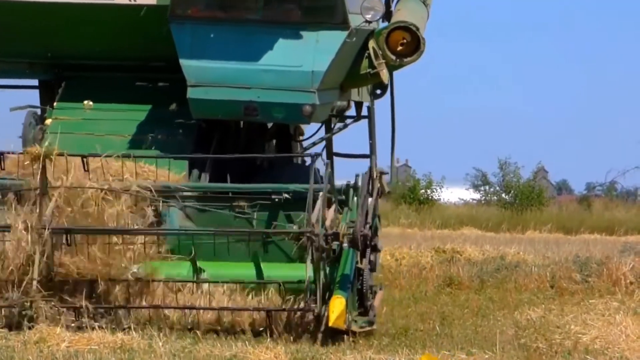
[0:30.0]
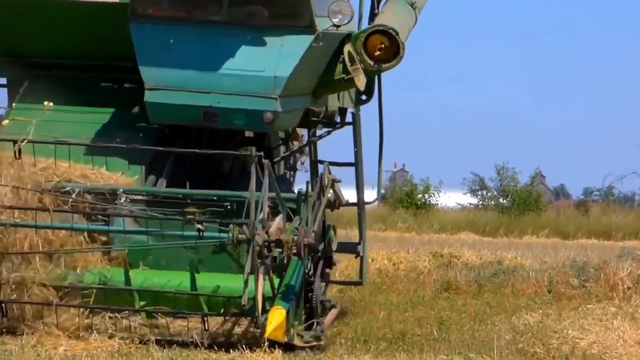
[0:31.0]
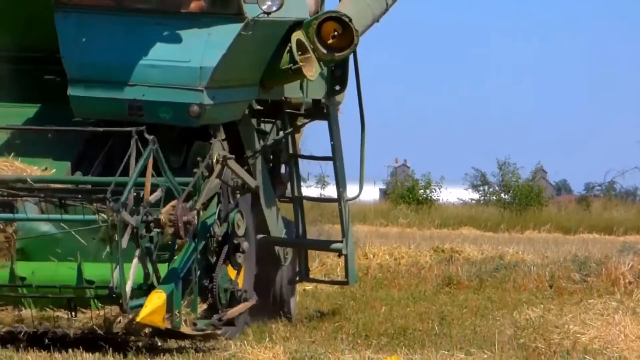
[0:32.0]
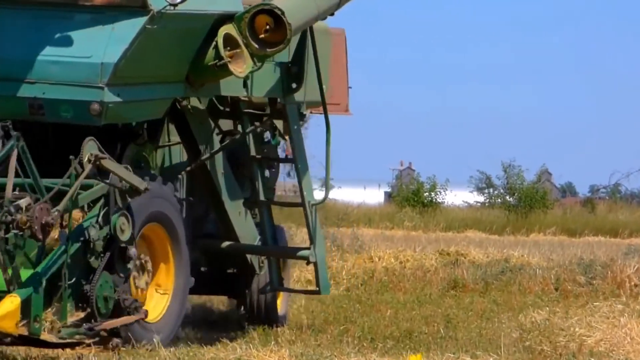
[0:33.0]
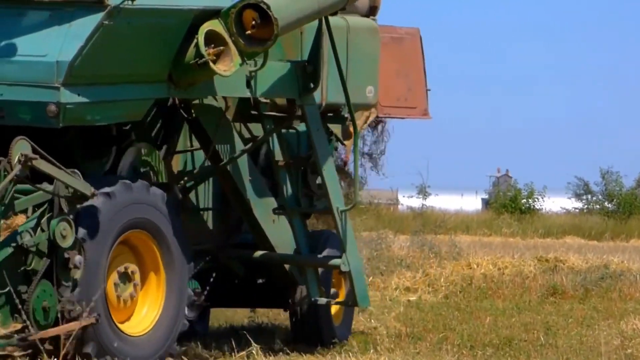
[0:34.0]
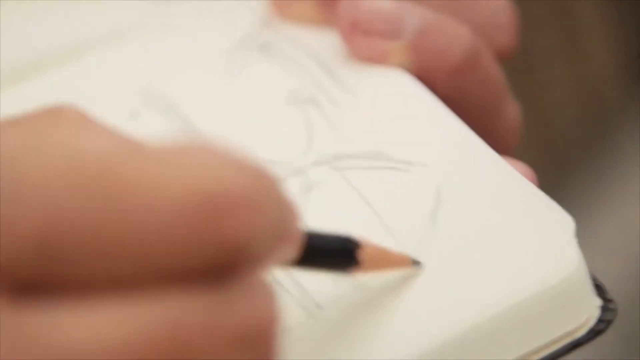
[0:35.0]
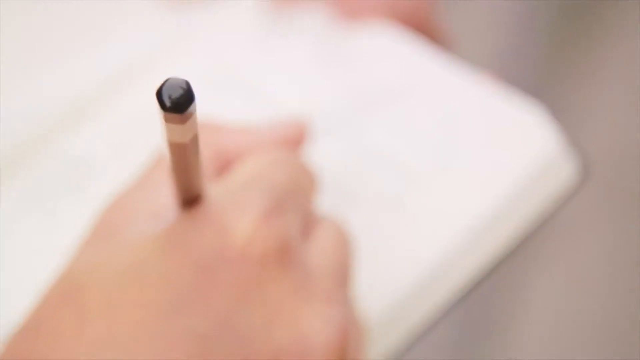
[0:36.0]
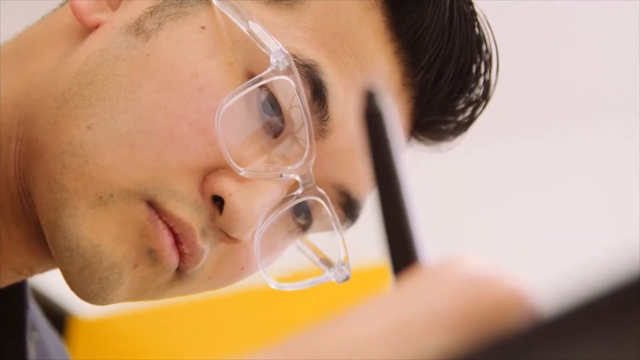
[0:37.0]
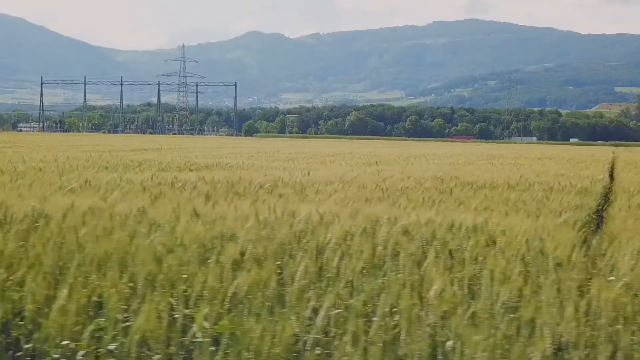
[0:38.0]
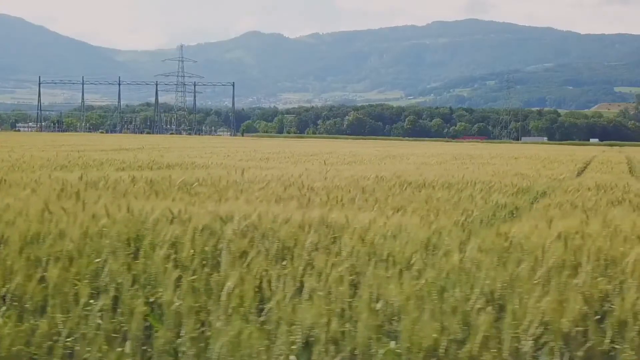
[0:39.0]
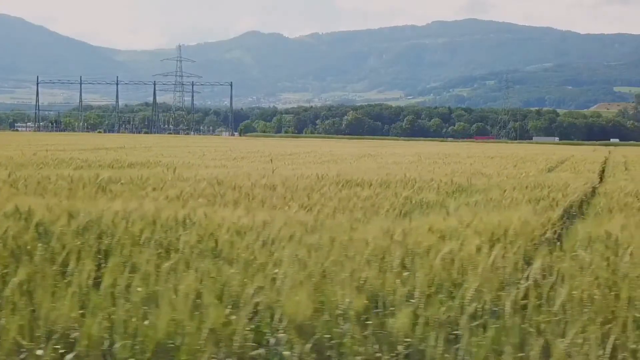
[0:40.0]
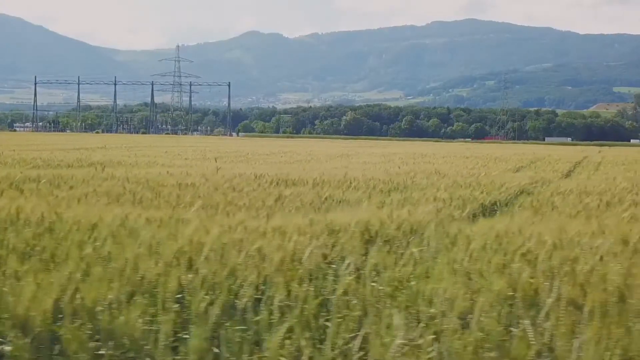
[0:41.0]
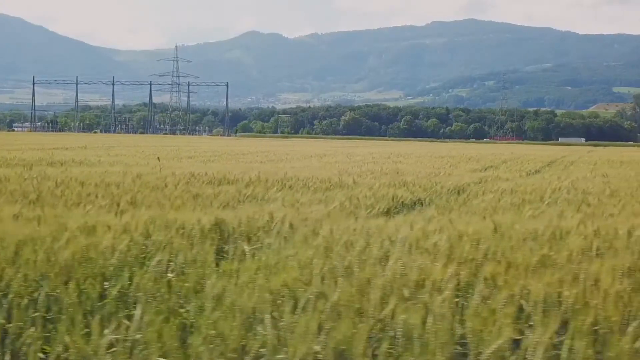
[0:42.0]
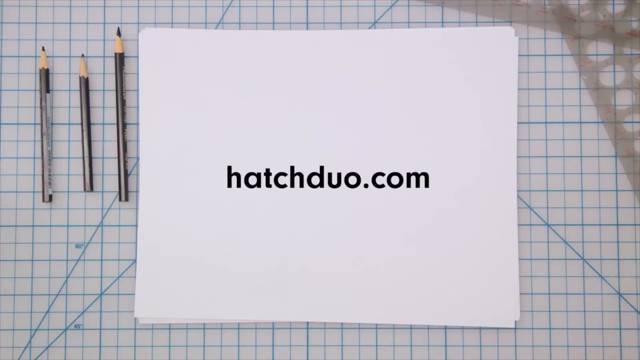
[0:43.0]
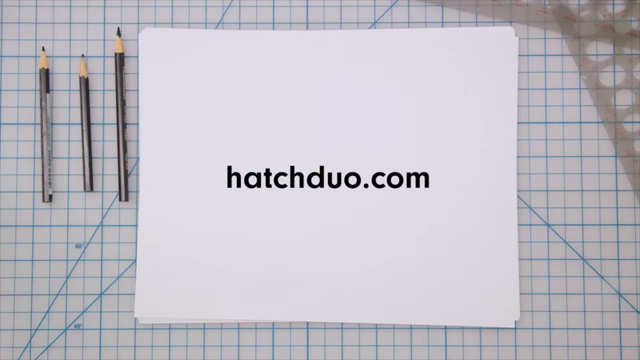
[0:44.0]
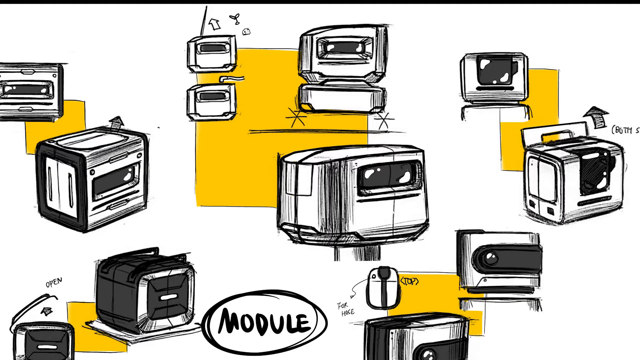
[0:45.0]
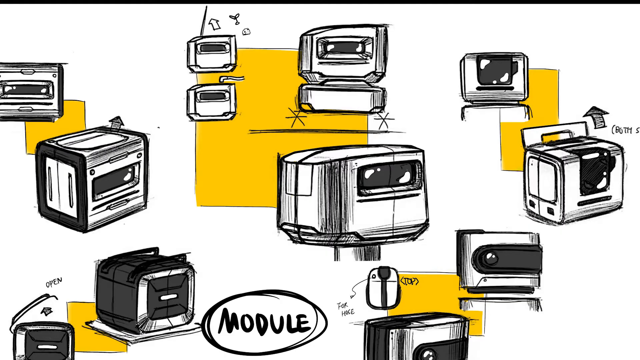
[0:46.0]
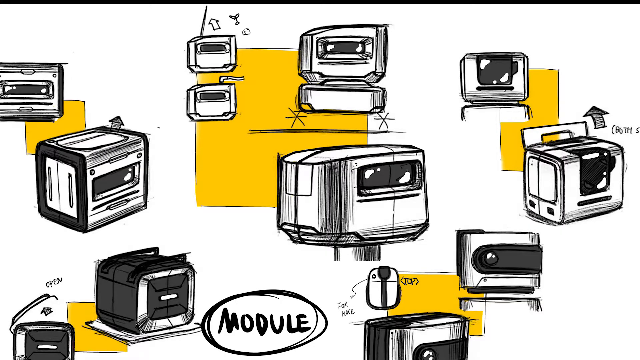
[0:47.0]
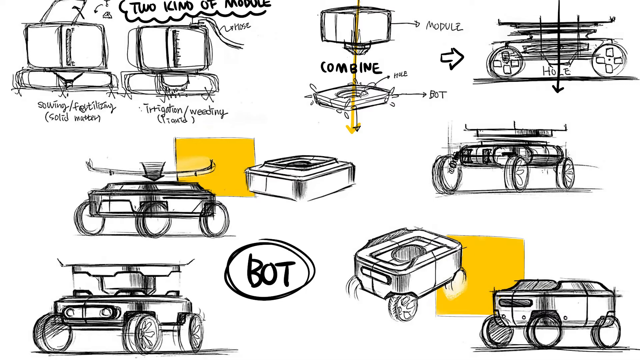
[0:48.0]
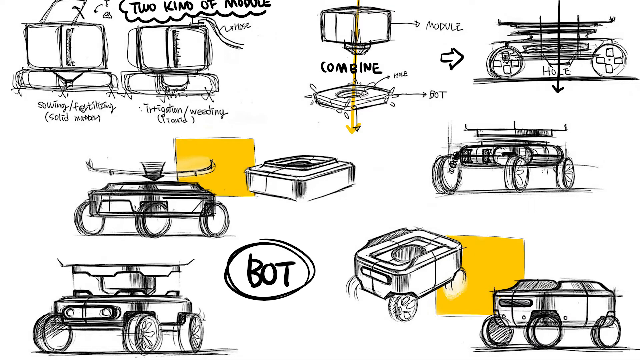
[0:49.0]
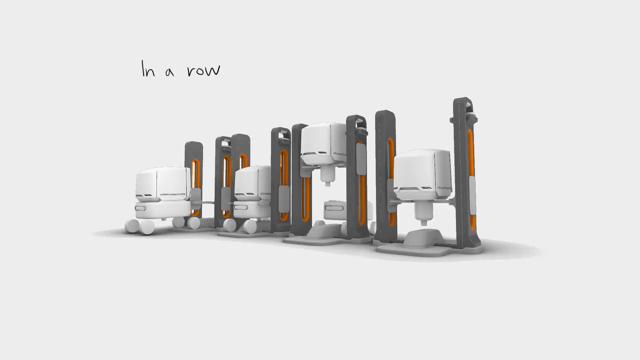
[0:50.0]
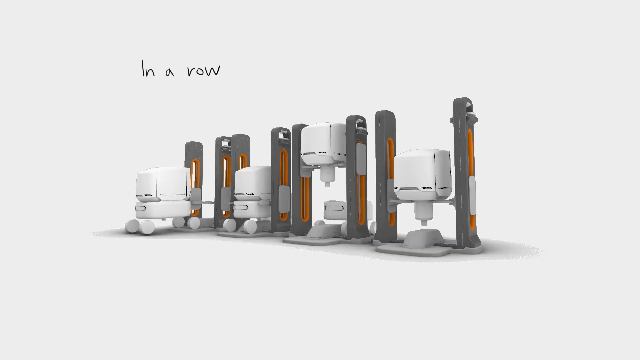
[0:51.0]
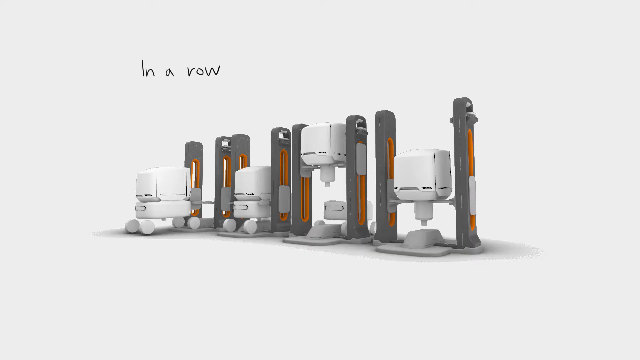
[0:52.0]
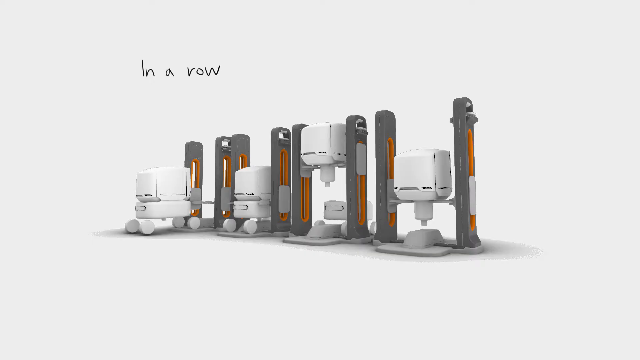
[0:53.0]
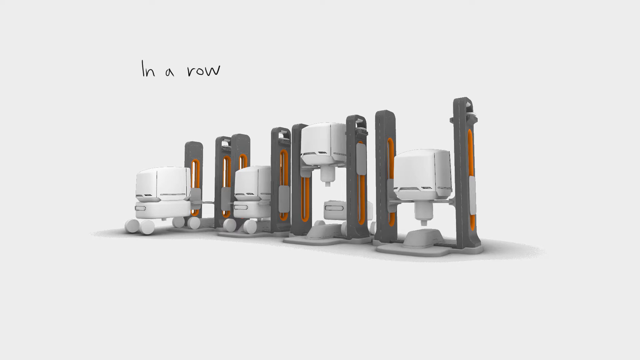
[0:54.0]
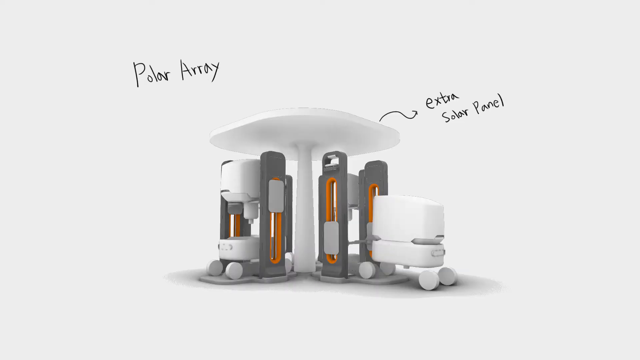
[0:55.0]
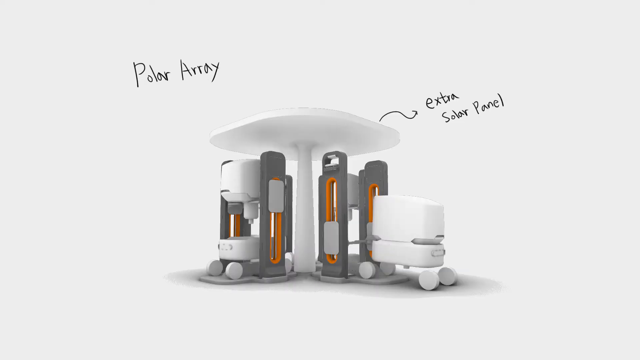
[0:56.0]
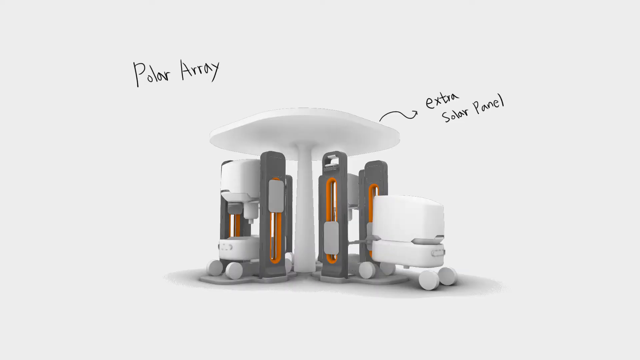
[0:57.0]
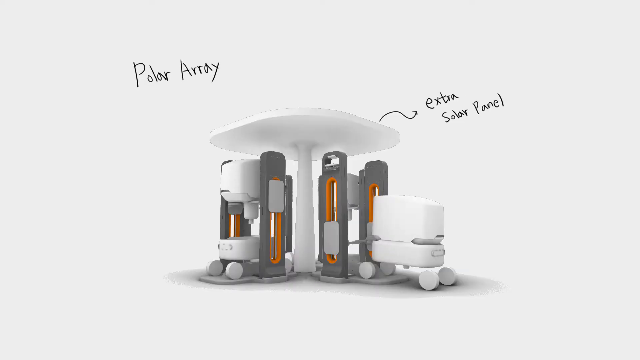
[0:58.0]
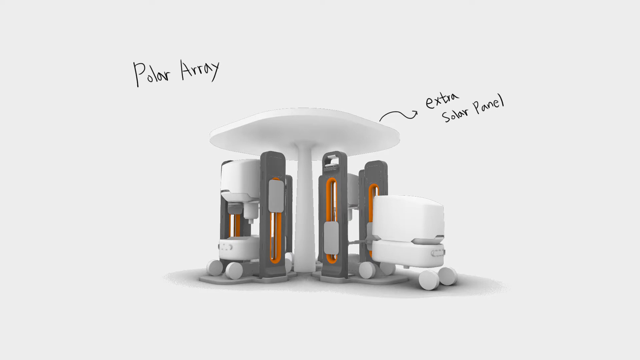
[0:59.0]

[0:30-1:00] A tractor churns through tan hay in a field, followed by quickly cut short shots of people writing and working on paper with pens. Another shot shows a large grass field or farmland as the camera pans from left to right; in the distance are large black mountains, and some cars and trucks drive from left to right down a road. After another cut, a square white piece of paper appears with black text in the middle reading "hatchduo.com", and on the left side three black pencils lie on a white and blue grid-like patterned background. The video then cuts to a drawing or graphic drawing of devices on a white background with some yellow squares and blocks; the devices look to be some type of machine. After a few more devices or graphics of devices are shown, a graphic shows how these mechanical devices work together, with labels on them such as "extra solar panel" and "polar array".